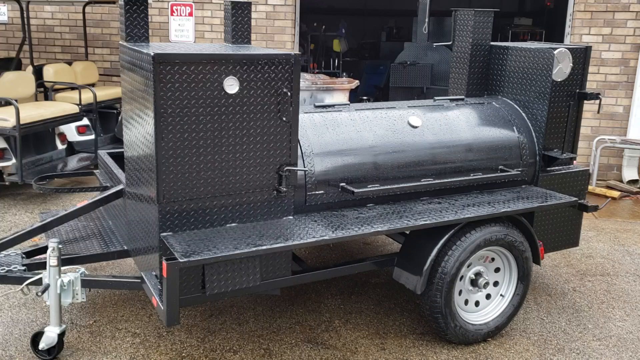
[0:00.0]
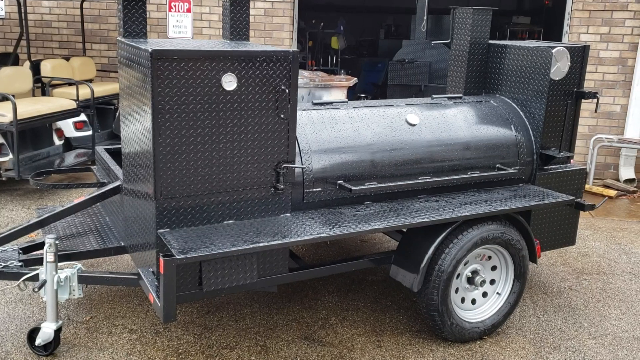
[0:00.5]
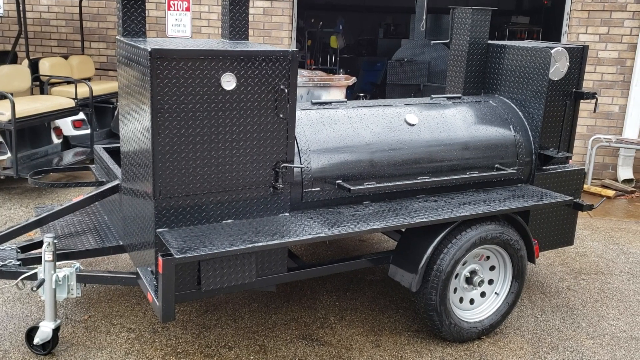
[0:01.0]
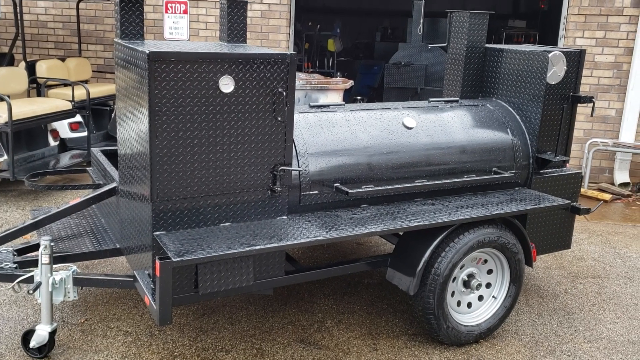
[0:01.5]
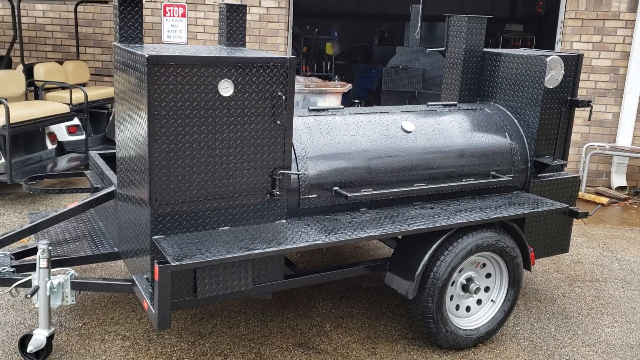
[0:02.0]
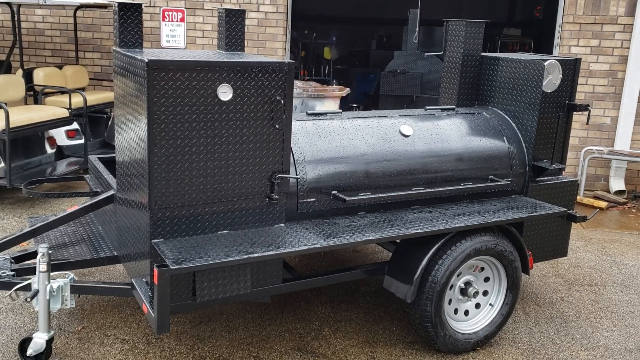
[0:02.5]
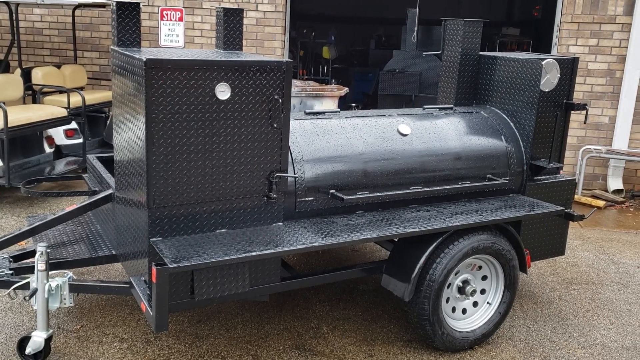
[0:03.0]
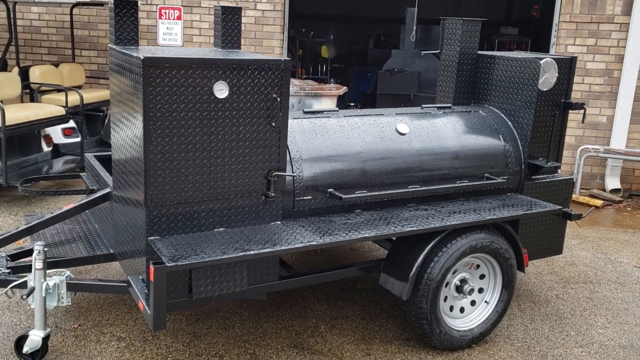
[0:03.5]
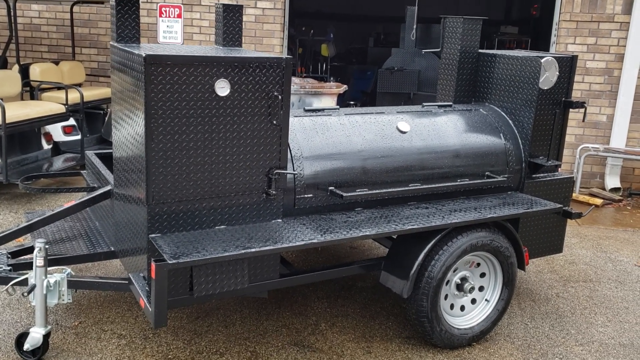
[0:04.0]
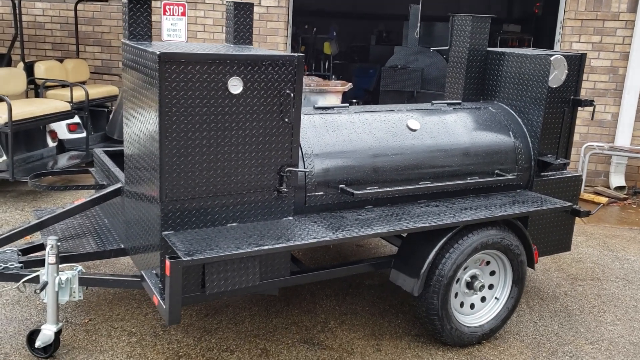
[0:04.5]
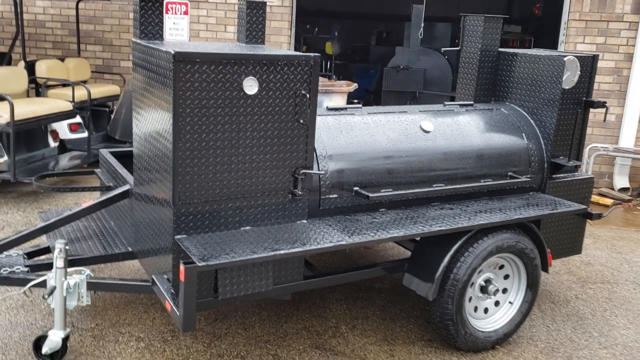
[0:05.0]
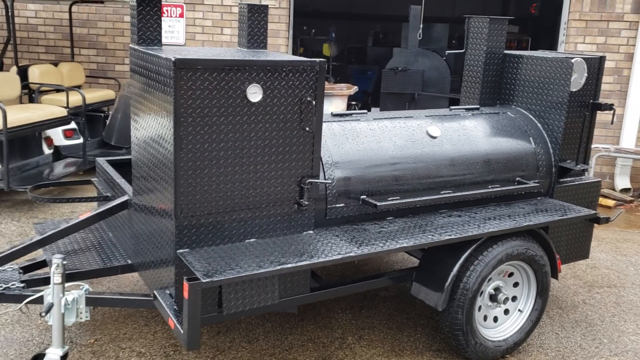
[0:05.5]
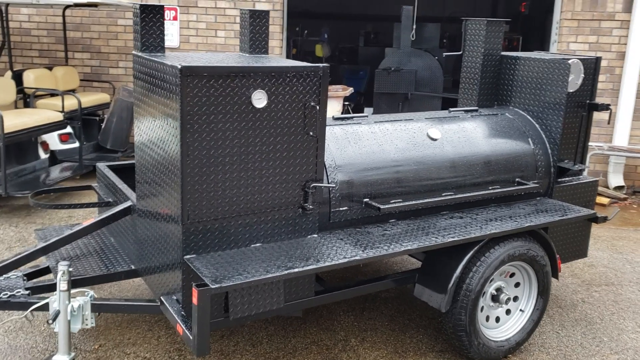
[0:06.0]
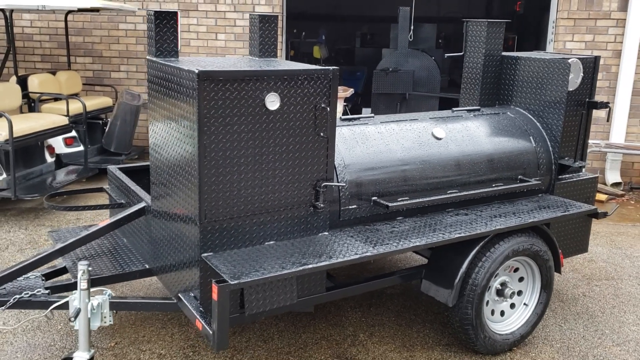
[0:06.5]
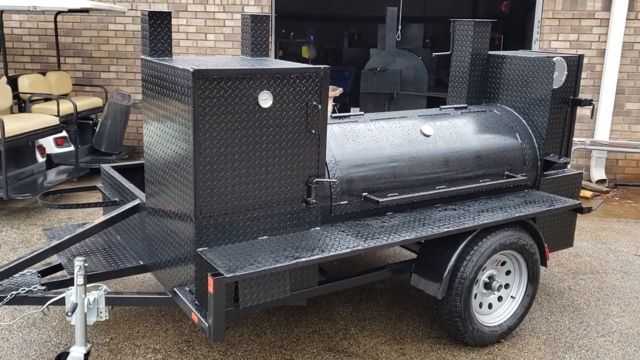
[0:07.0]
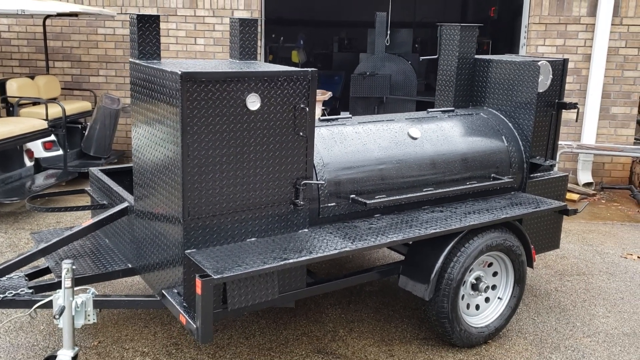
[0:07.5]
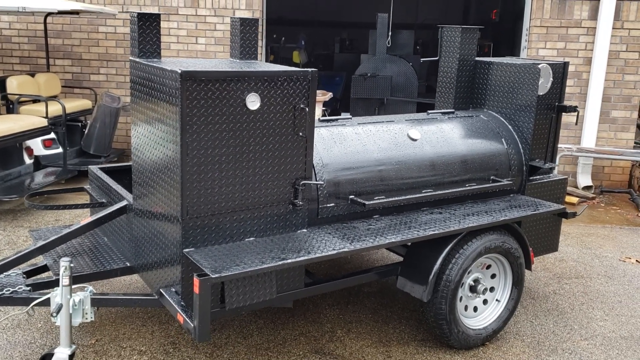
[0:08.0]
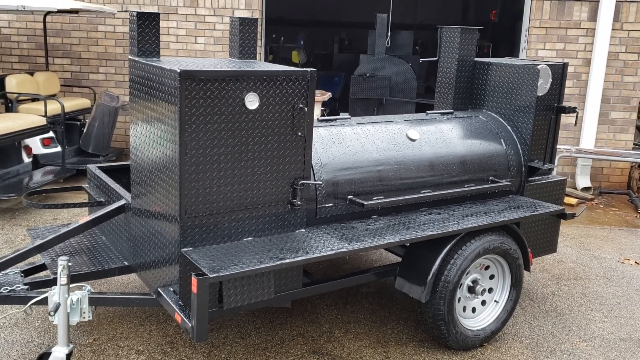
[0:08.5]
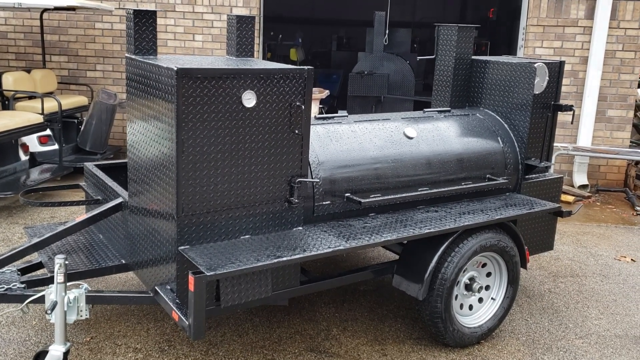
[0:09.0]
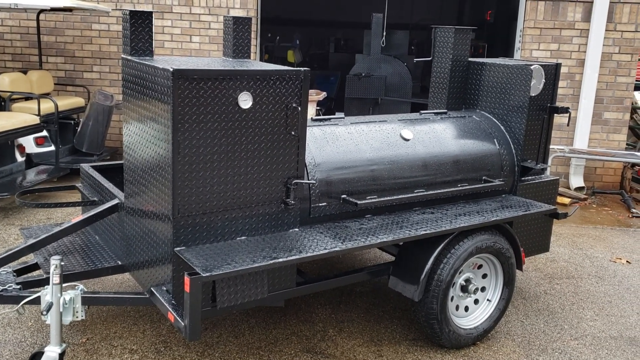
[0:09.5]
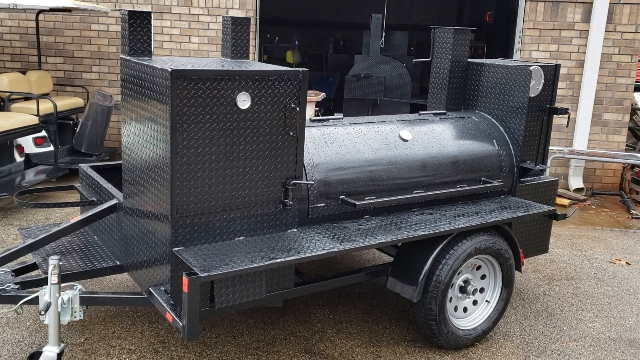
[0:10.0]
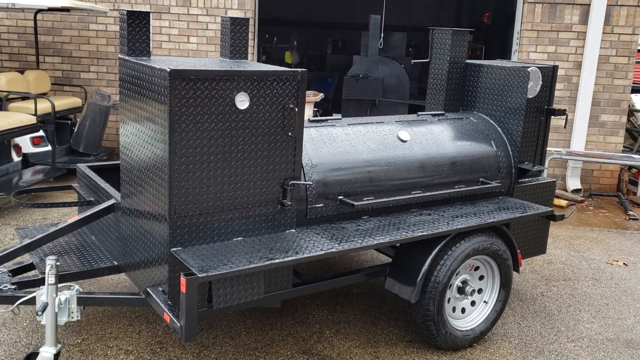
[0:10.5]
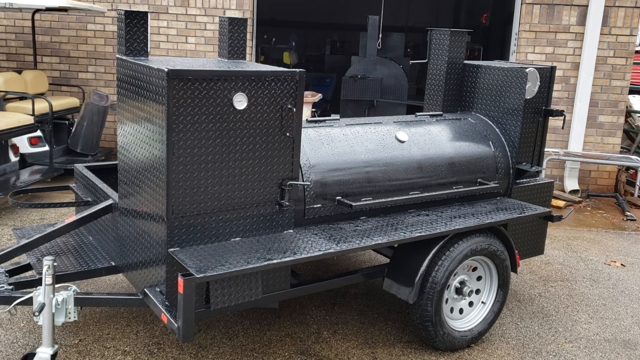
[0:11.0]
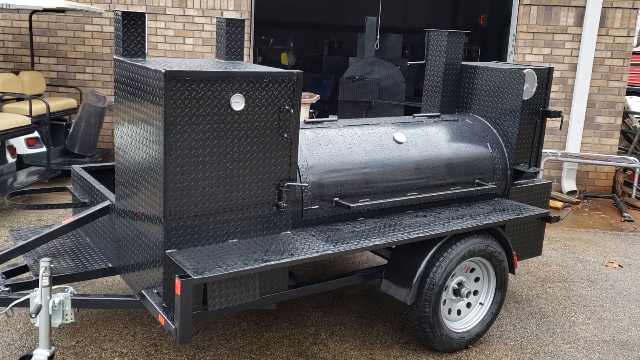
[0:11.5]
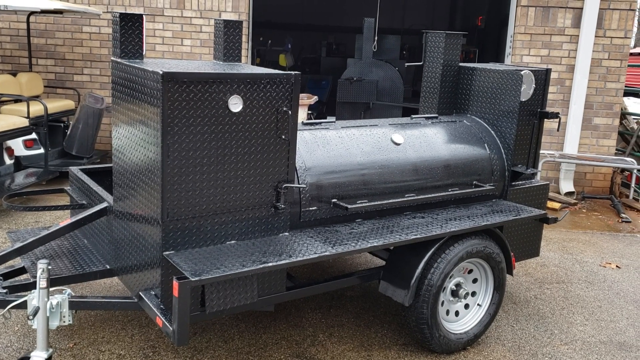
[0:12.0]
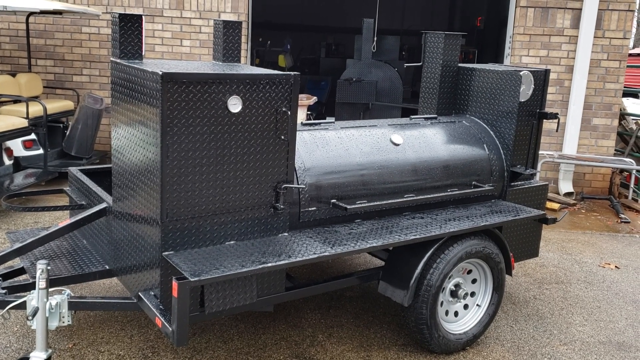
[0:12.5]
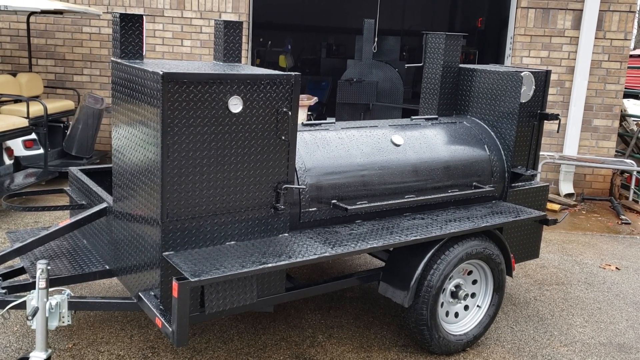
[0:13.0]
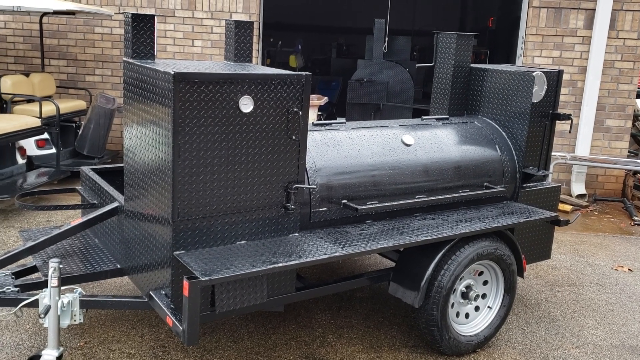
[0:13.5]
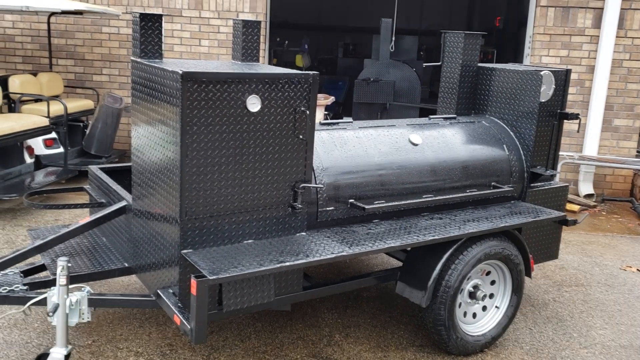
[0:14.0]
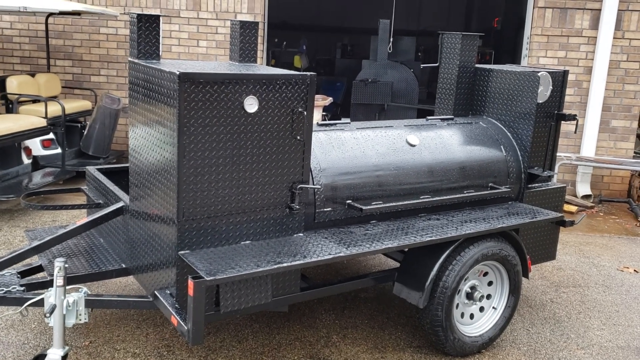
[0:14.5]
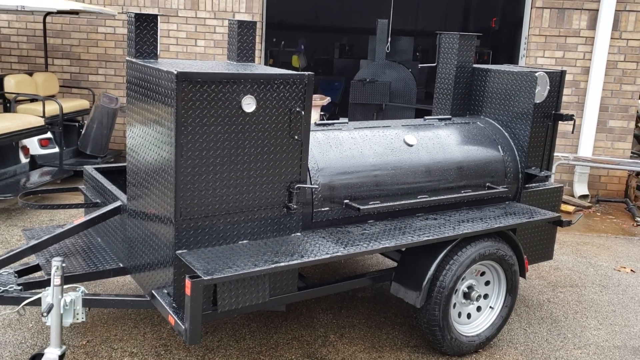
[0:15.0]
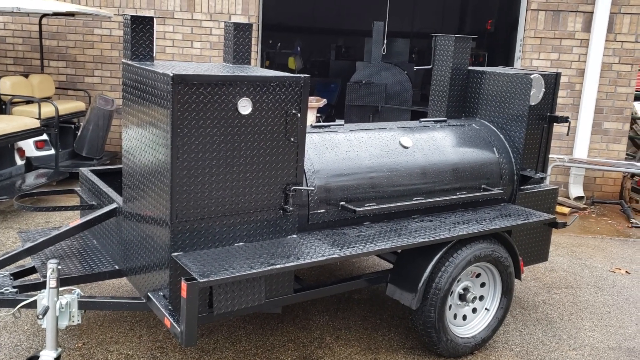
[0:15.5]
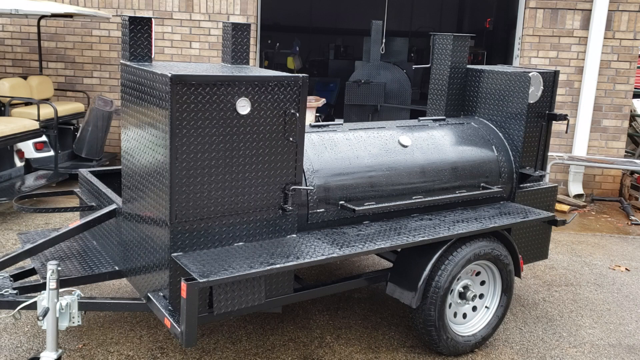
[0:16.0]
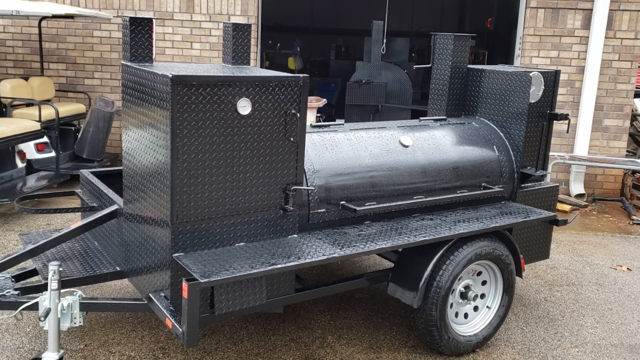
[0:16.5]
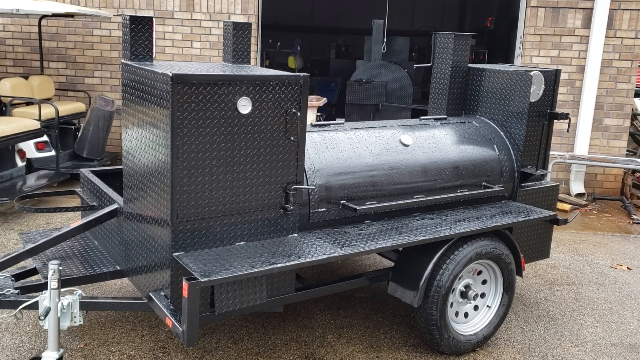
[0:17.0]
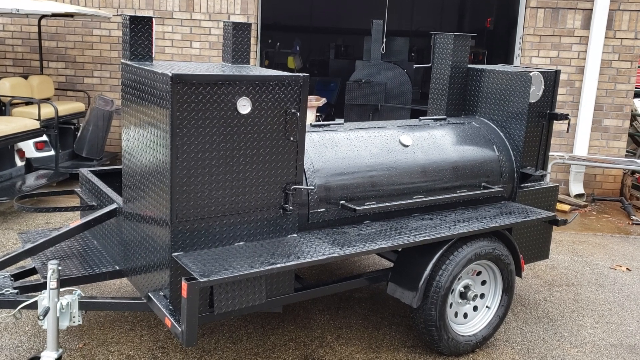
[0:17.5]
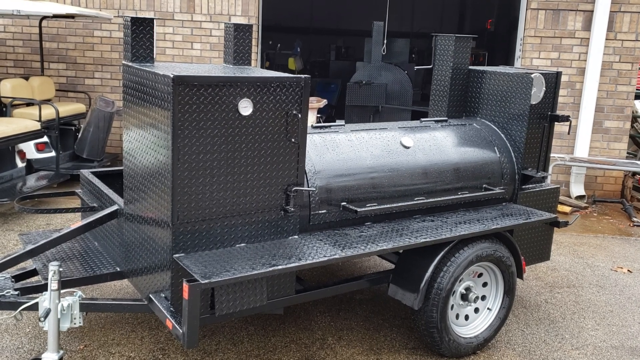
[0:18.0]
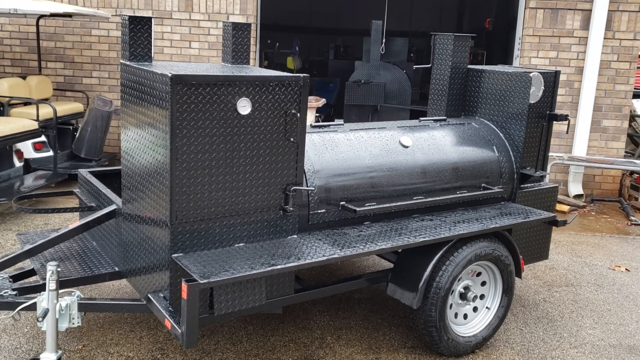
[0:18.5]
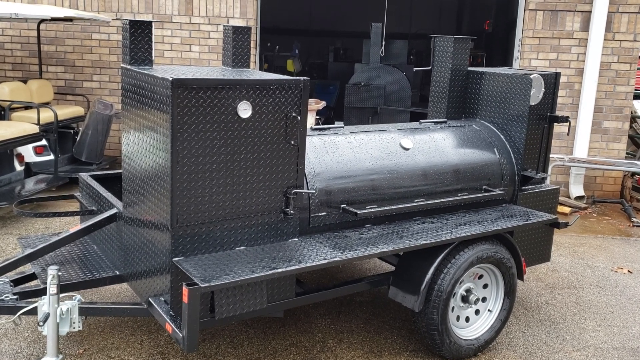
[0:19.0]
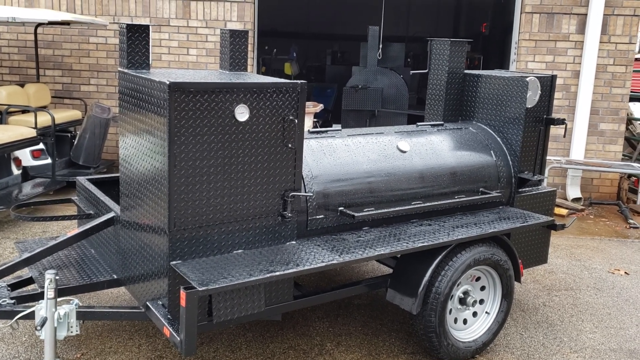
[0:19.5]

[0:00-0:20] A storeroom is at the back. There are two golf cars, and beside them is a black two-wheel trailer standing alone that looks like a braai stand. There are no people in the area, only the cars and this trailer. The trailer has a space or cupboard on the side, is made of metal, and has wheels.